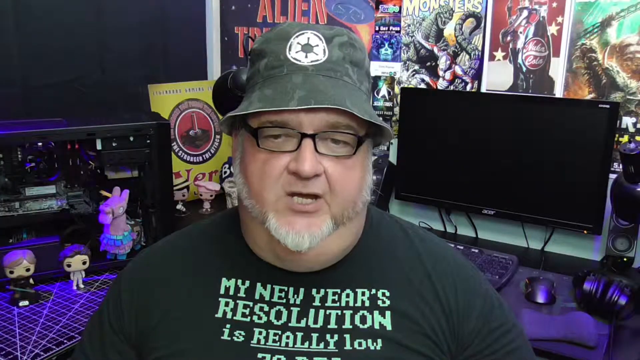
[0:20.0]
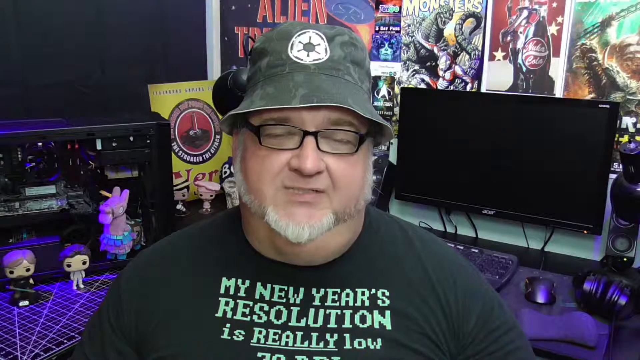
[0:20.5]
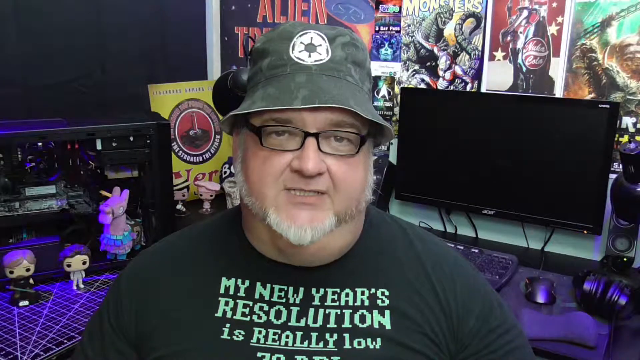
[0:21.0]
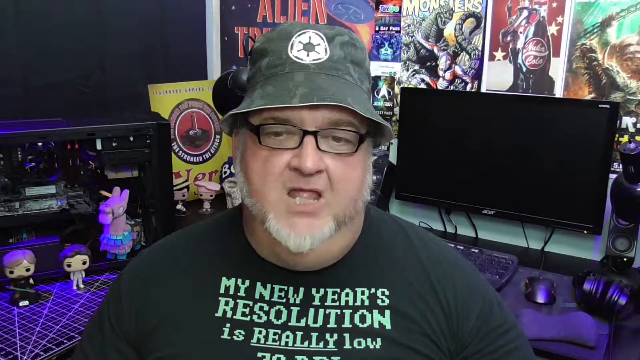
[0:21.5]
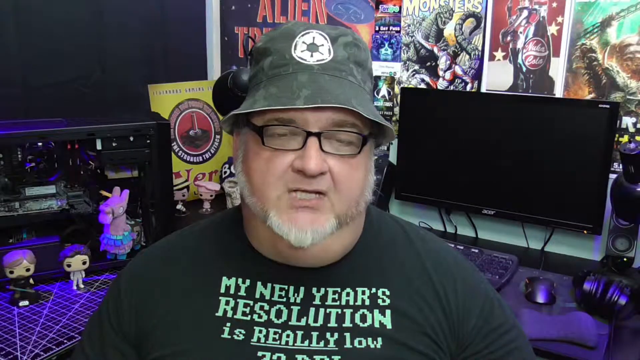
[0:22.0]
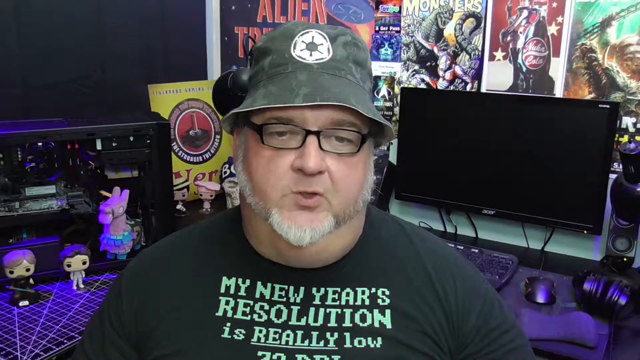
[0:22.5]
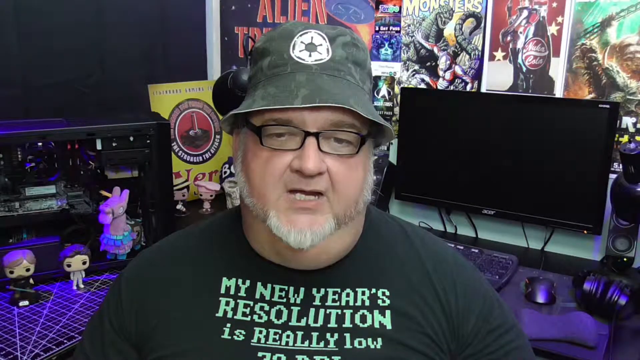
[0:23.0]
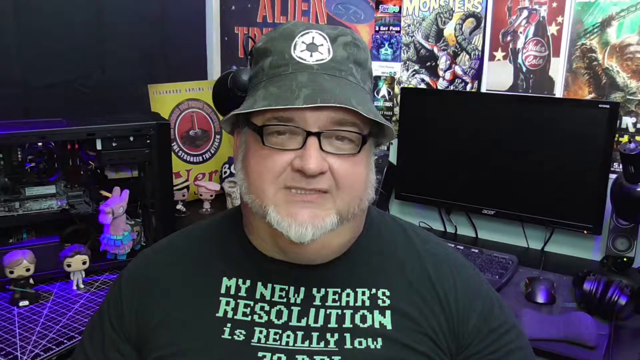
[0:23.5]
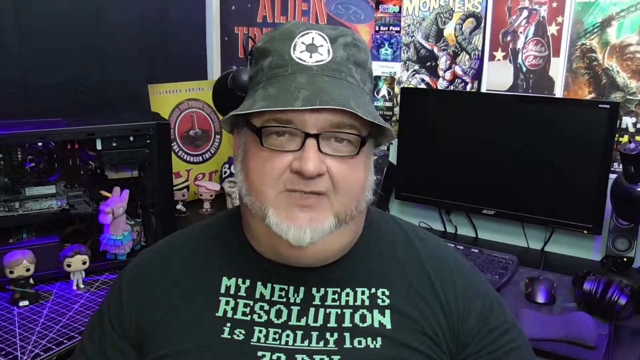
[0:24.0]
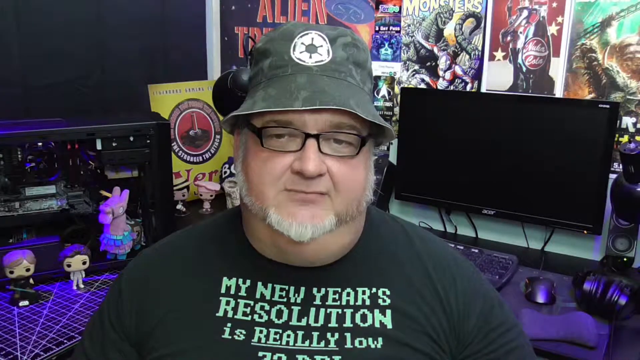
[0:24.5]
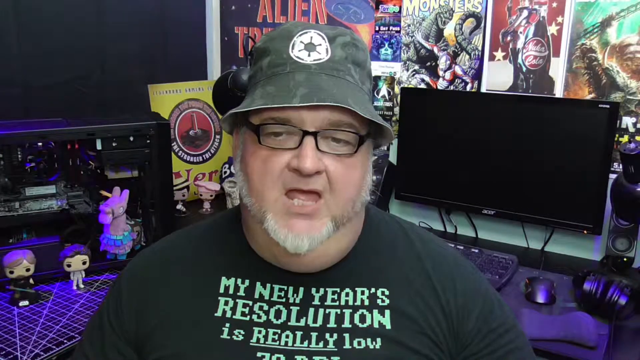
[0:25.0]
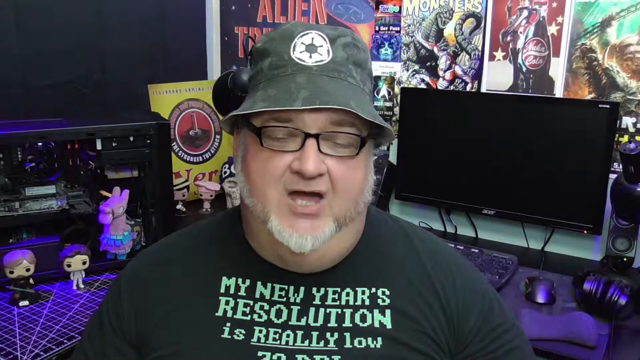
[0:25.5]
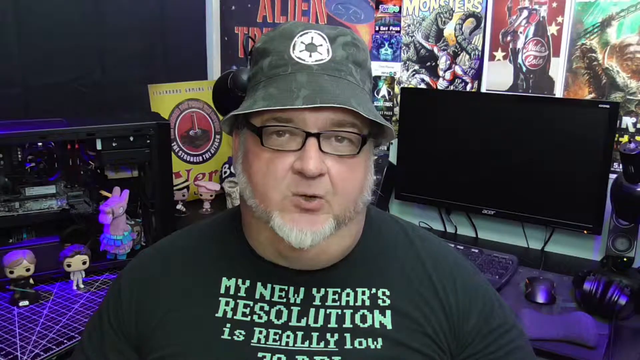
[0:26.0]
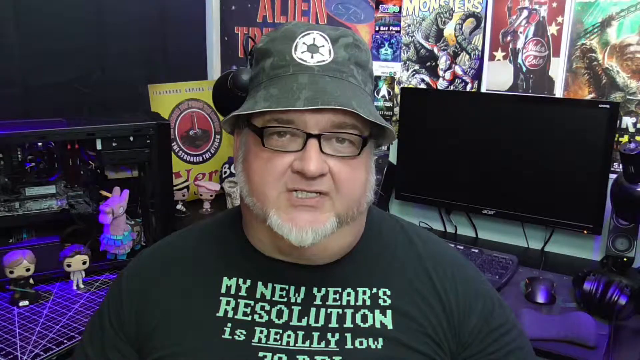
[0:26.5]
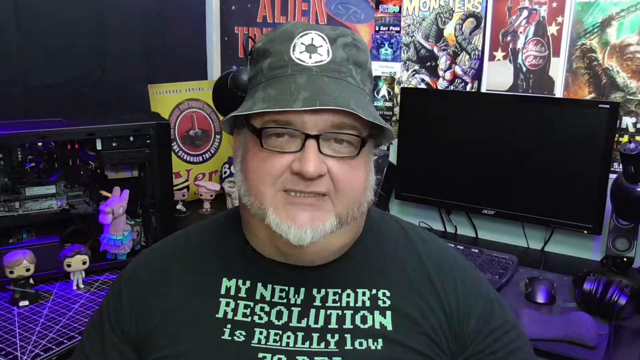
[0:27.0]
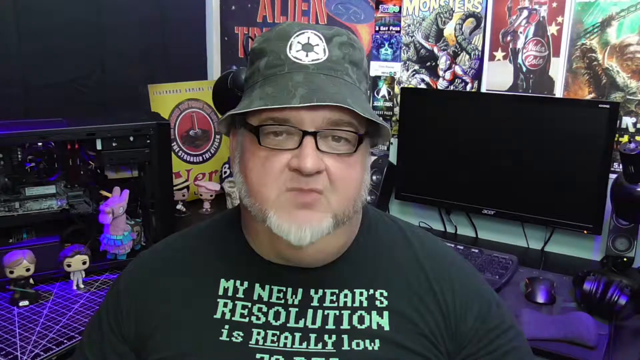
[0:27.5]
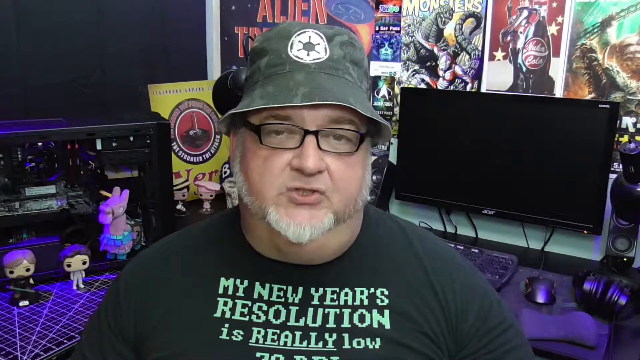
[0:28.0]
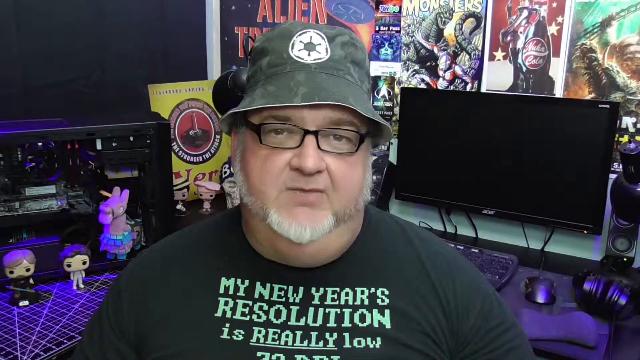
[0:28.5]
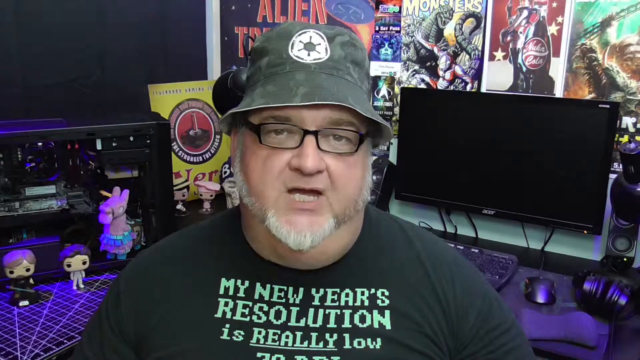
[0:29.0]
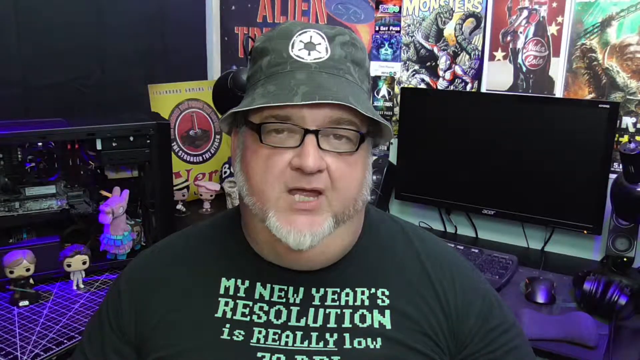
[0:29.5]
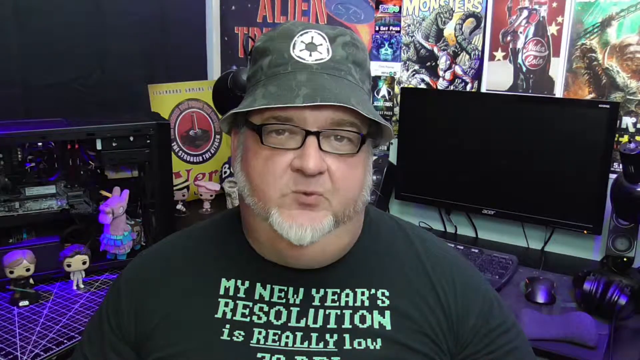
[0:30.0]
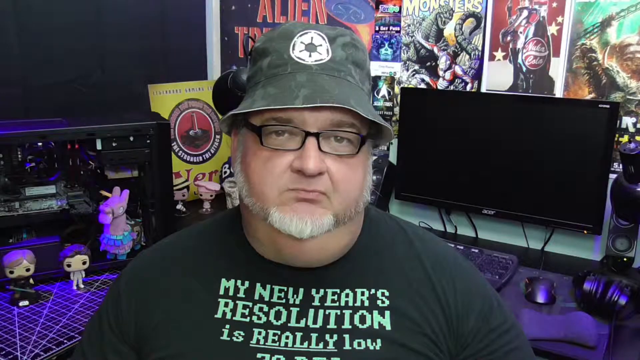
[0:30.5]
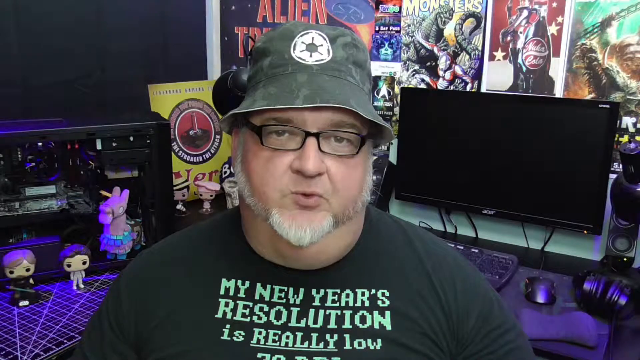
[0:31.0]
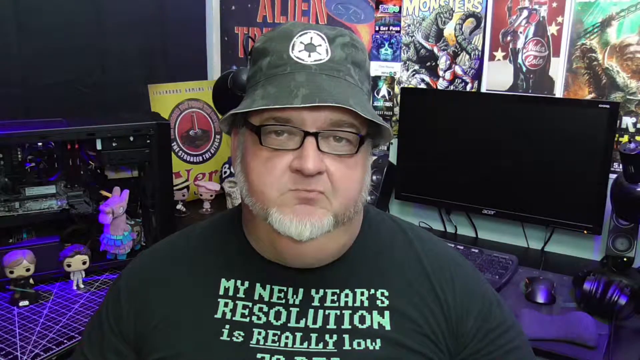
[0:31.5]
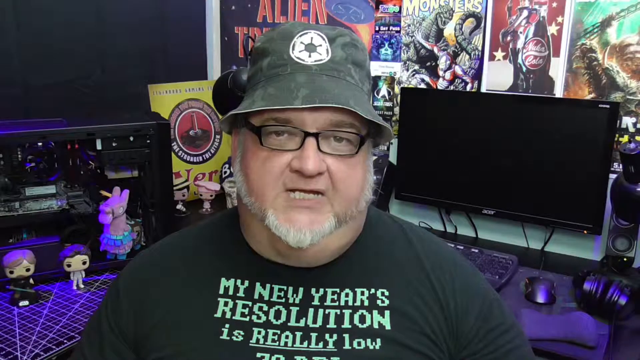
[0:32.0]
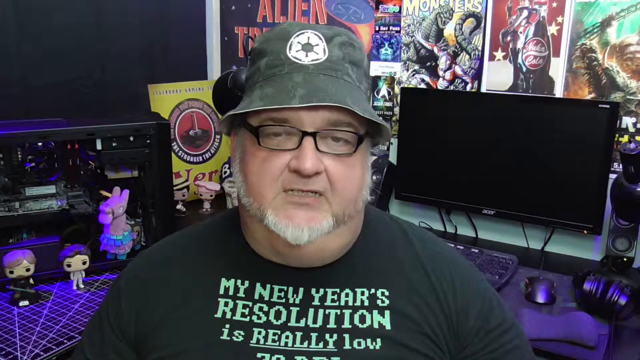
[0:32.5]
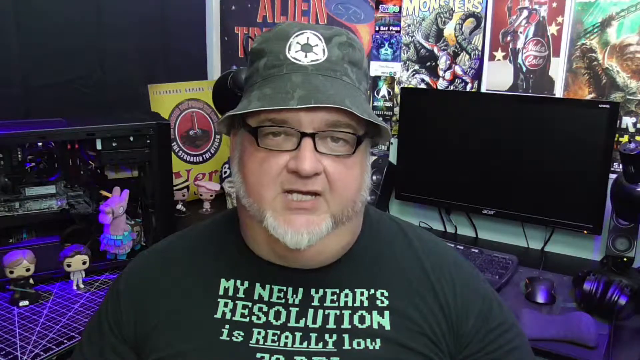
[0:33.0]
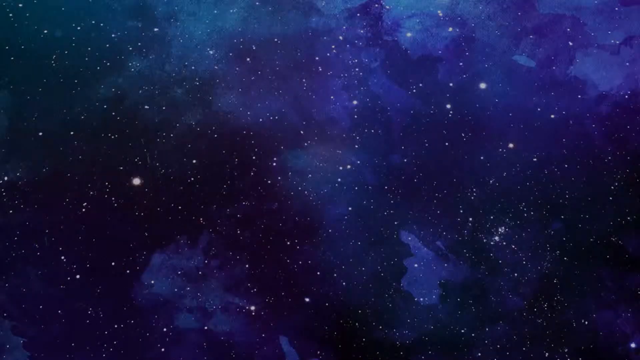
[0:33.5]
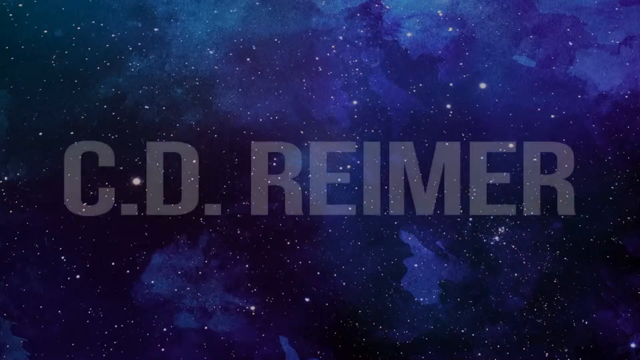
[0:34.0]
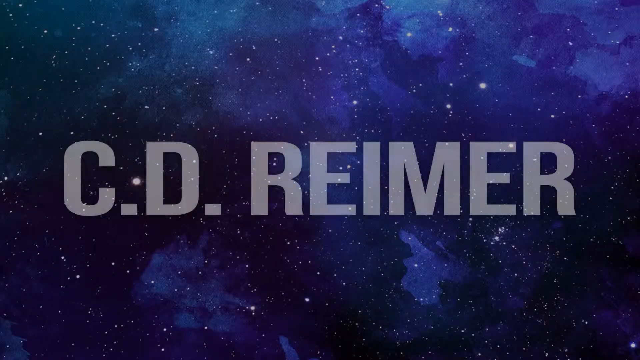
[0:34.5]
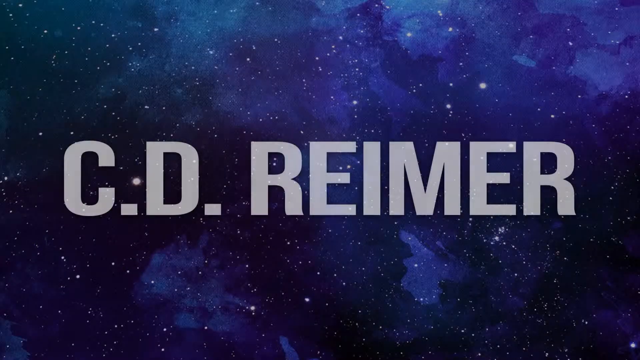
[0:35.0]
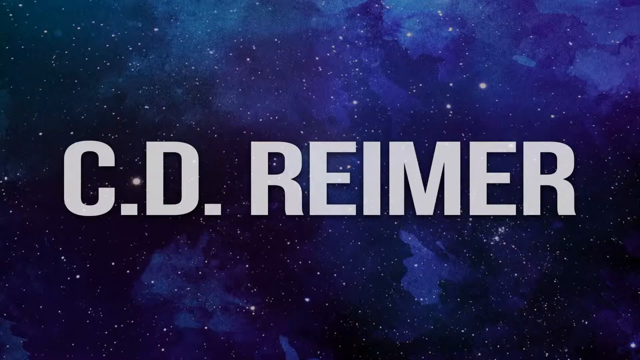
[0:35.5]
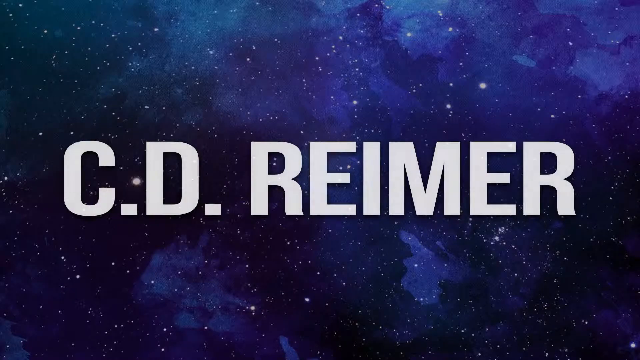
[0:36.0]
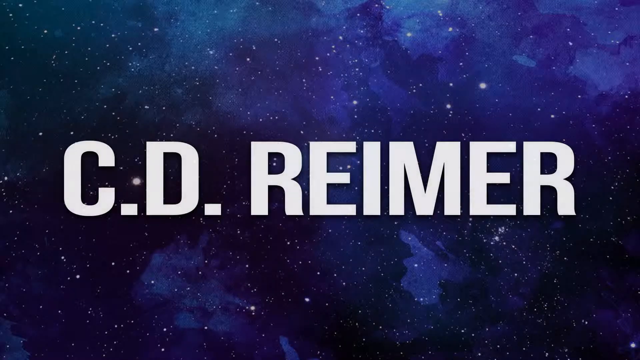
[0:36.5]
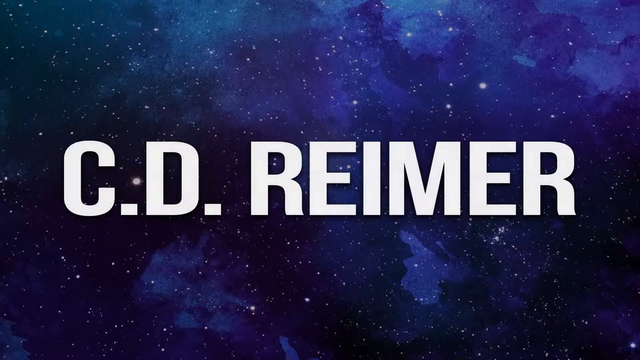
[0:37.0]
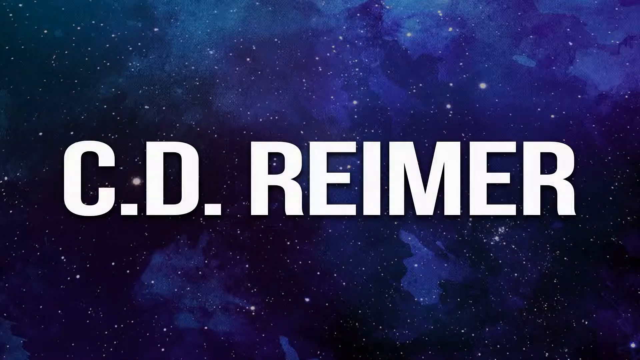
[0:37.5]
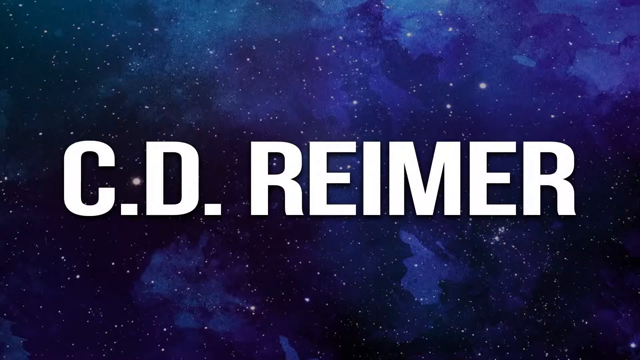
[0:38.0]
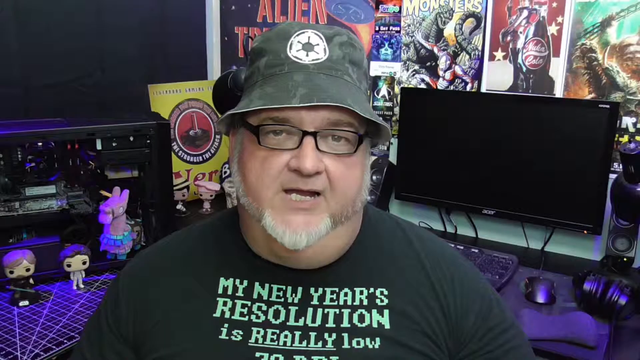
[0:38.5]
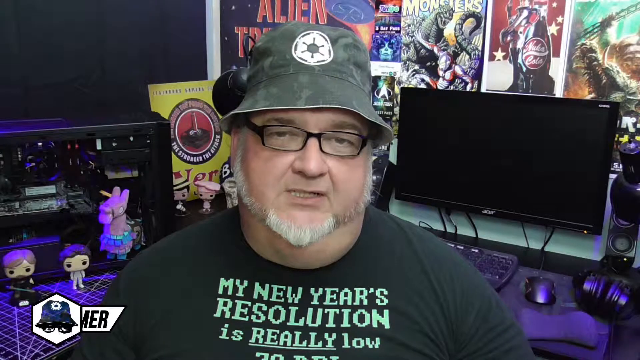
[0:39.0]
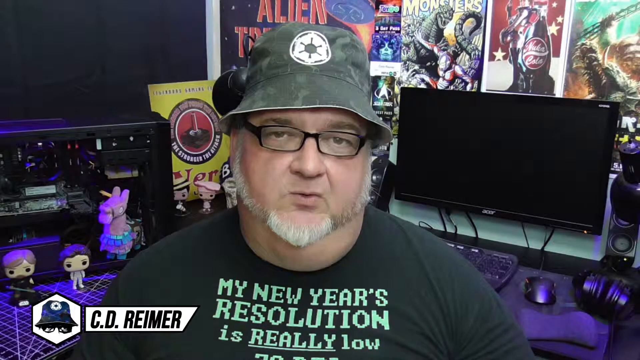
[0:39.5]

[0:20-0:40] The man keeps speaking to the camera, raising his eyebrows as he talks. He wears a kind of bucket hat with a camo effect. The screen then transitions to a galaxy background, mainly purple and blue and a bit dark, with all-caps letters in an intro style that say "c.d.reimer". It cuts back to the man speaking, and now a little animation appears in the bottom left: what seems to be the person's logo, a figure with a little bucket hat and glasses in a white hexagon shape. Next to it, the name C. D. Reimer appears with an animation from left to right. Behind the man there seems to be some kind of Godzilla poster that says "monster", with a big monster at the front. To the right of it is a Luka Cola poster, apparently a Fallout video game reference.